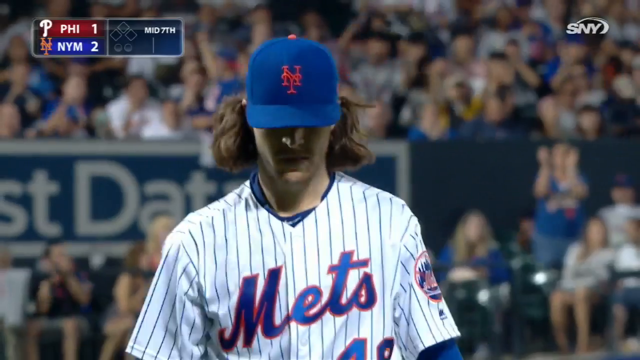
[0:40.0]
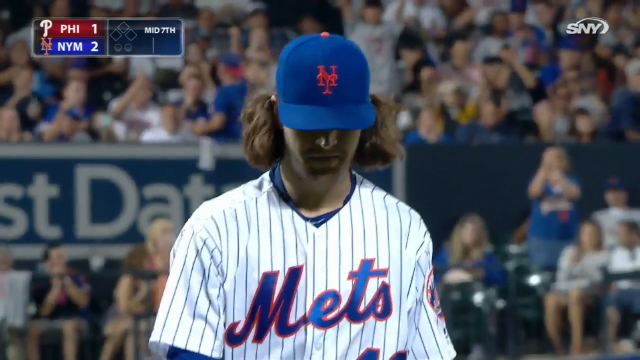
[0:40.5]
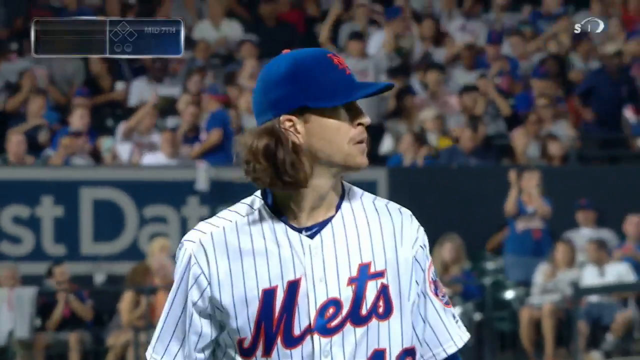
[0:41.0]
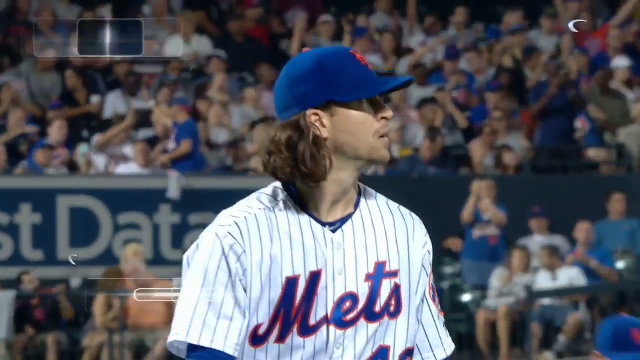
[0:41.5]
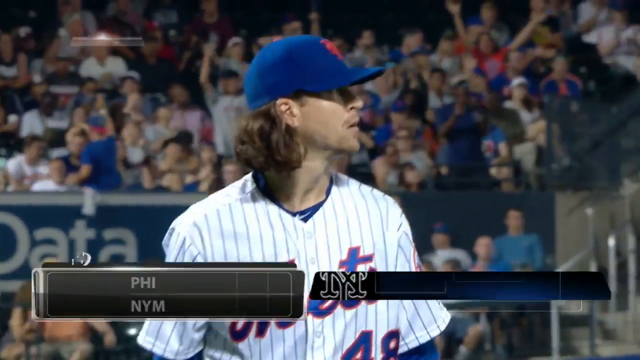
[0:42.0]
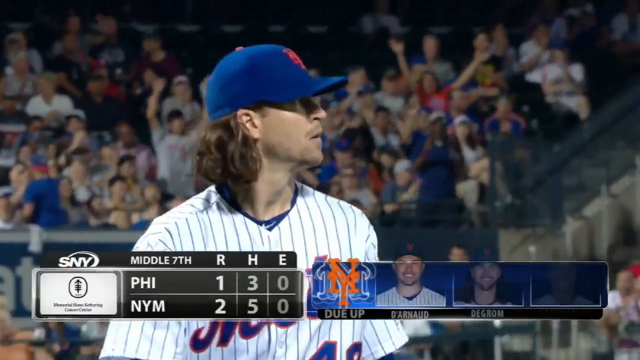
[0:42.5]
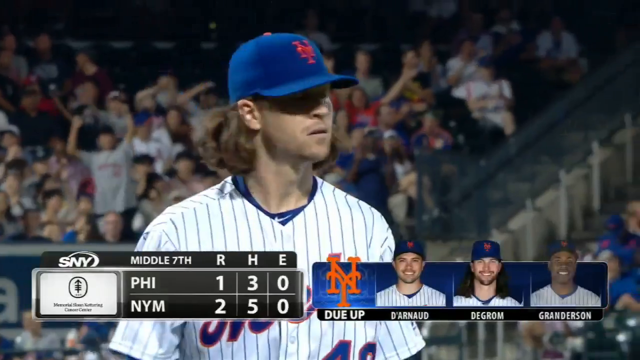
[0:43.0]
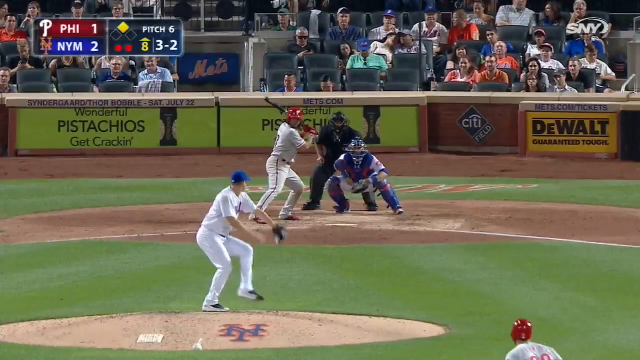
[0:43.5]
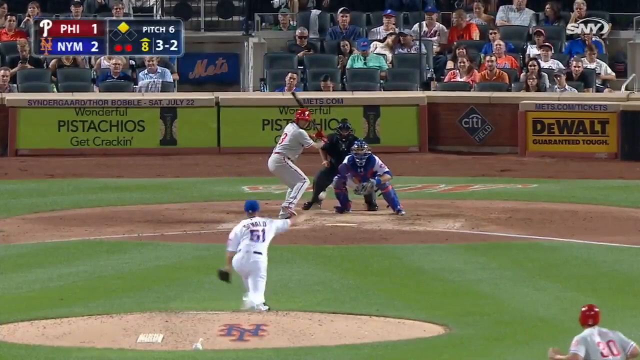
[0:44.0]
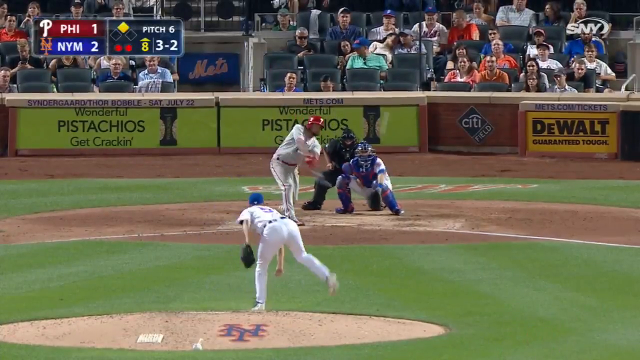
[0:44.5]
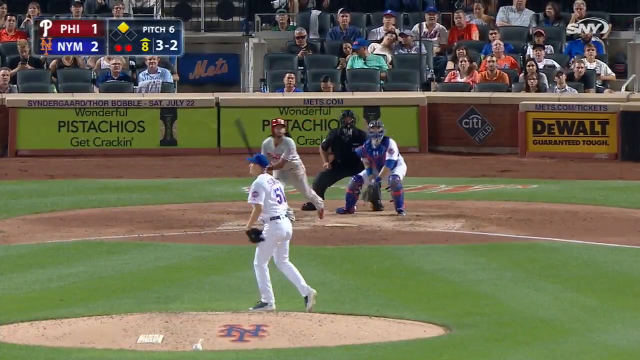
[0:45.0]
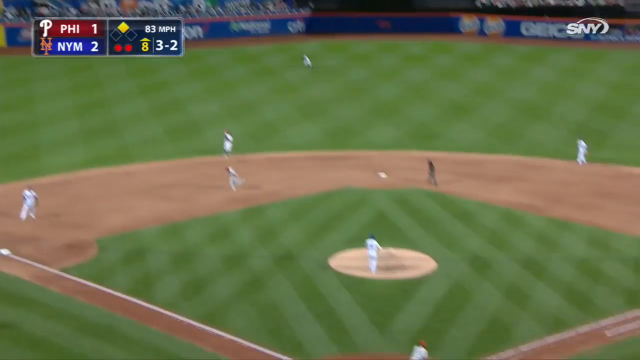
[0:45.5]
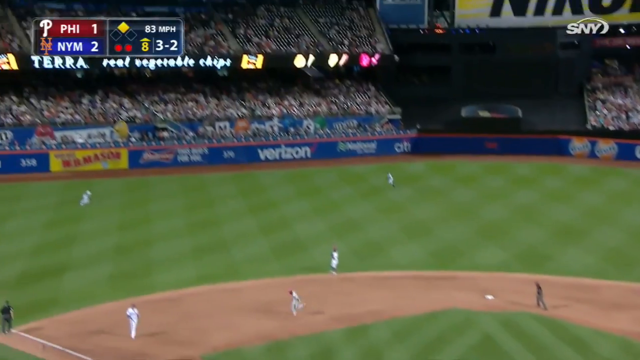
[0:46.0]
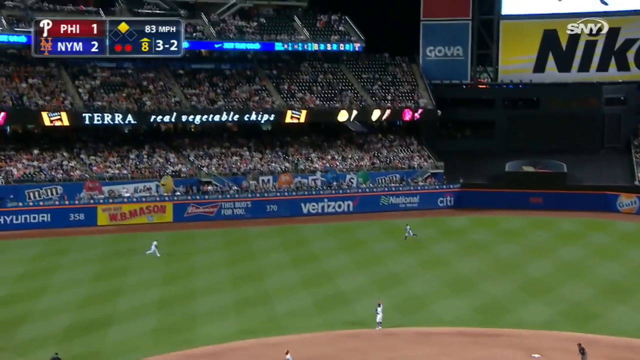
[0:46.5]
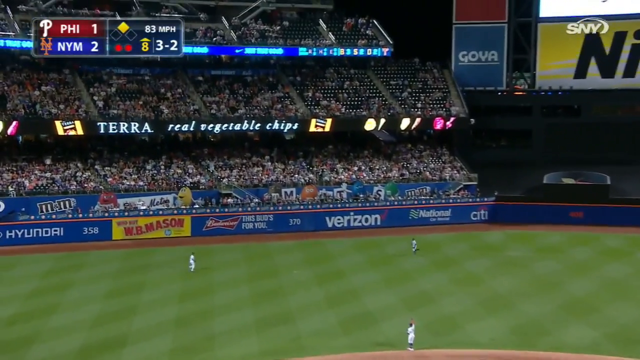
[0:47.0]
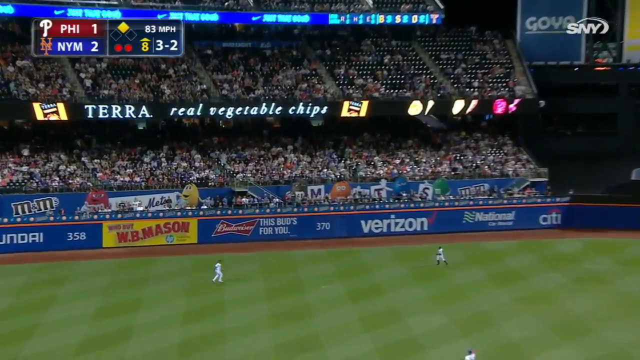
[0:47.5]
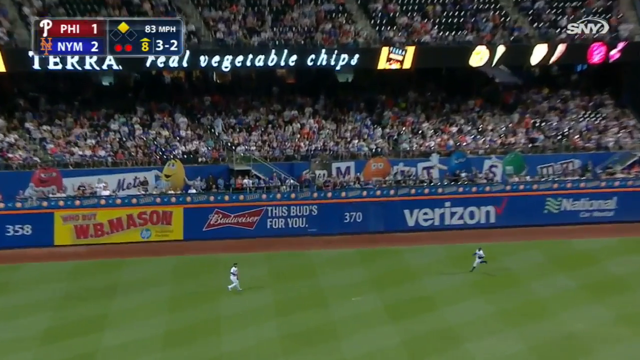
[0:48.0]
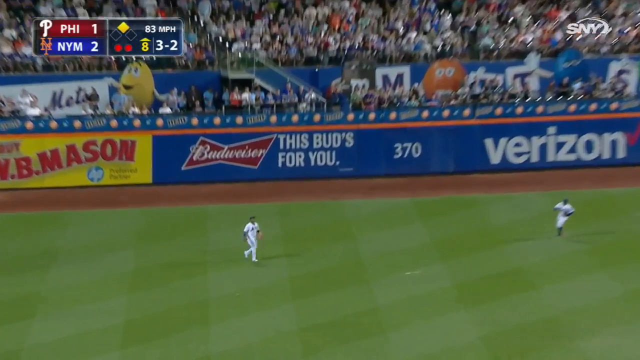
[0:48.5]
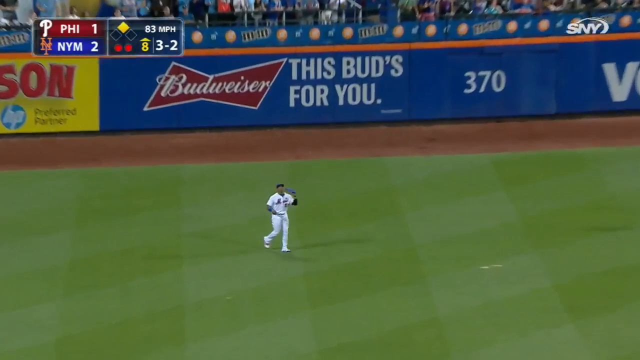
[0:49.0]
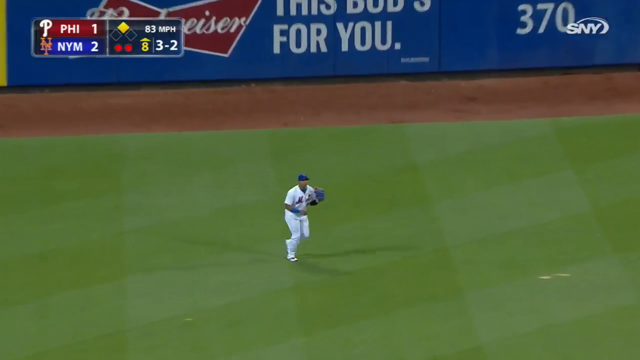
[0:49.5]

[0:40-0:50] Jacob DeGrom is shown walking, and then a new pitcher is put in, apparently replacing DeGrom. The new Mets pitcher pitches to a Phillies batter, who hits the ball, and it is caught for an out by a Mets outfielder. This is the middle of the seventh inning. Highlights and stats are shown, including the Mets players who will be hitting soon, among them DeGrom. The Mets are up 2-1, with five hits to three.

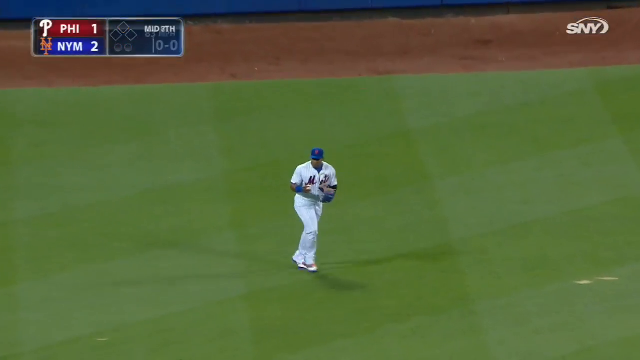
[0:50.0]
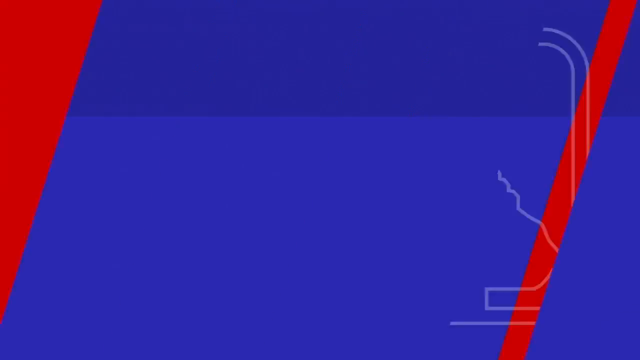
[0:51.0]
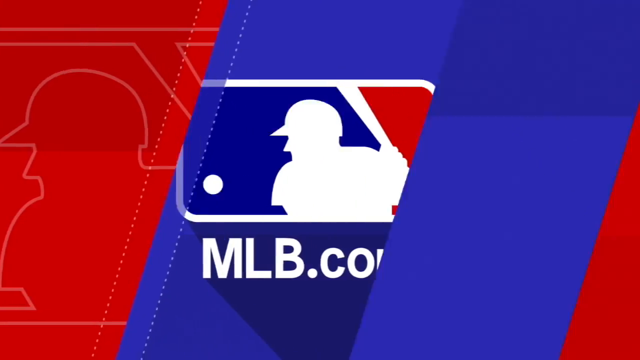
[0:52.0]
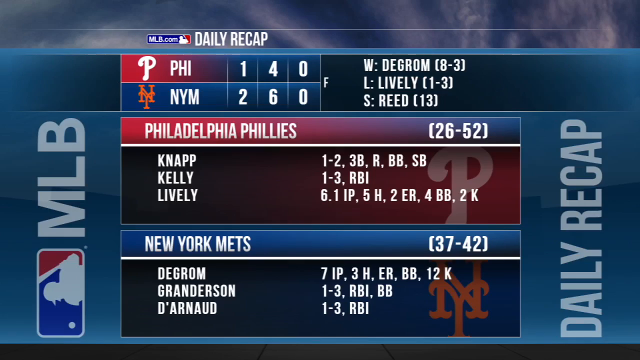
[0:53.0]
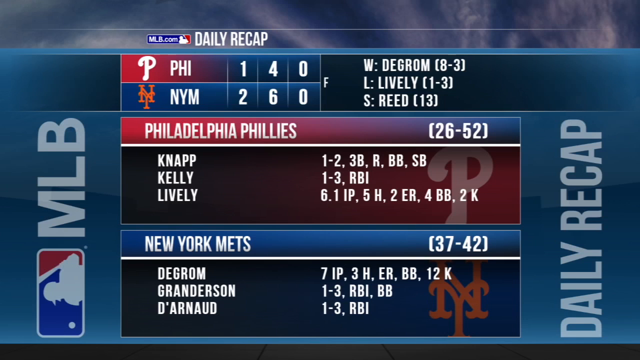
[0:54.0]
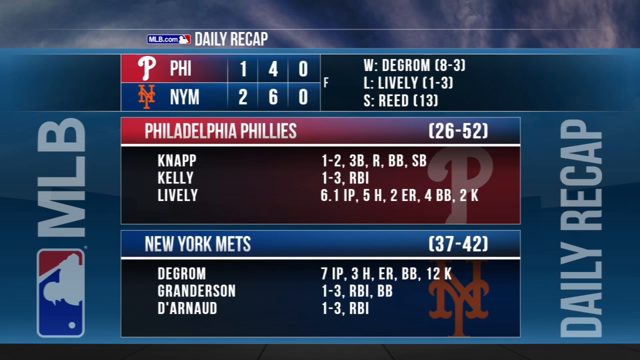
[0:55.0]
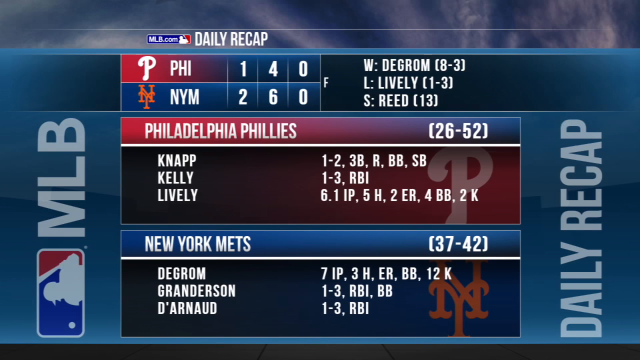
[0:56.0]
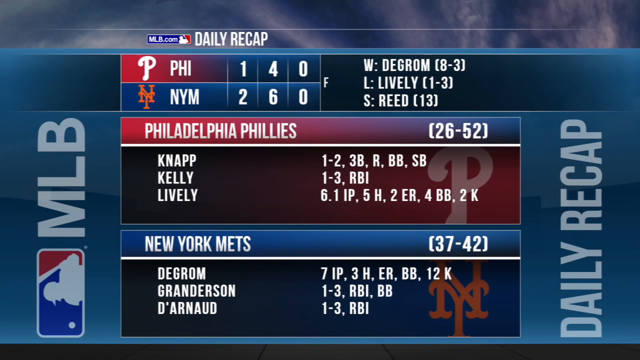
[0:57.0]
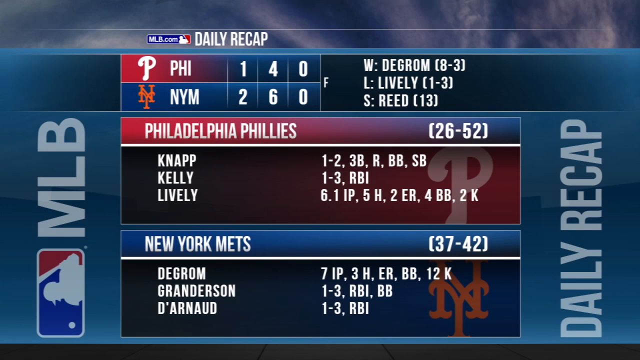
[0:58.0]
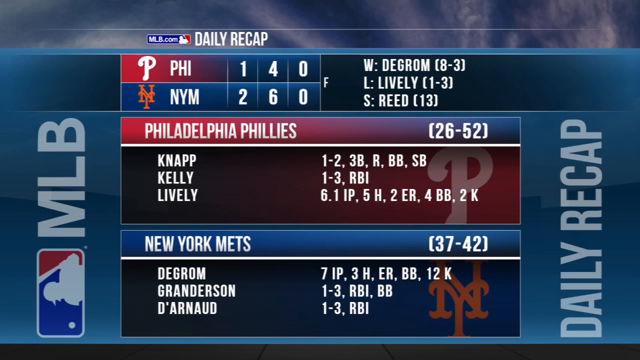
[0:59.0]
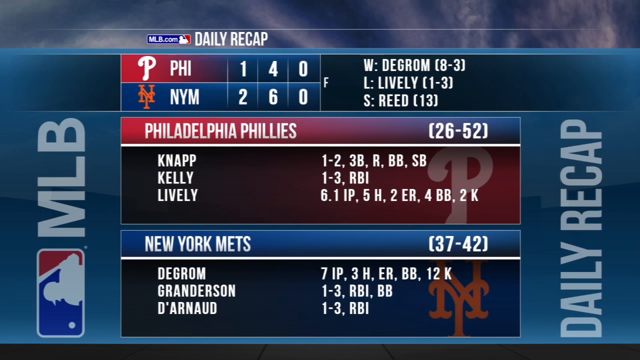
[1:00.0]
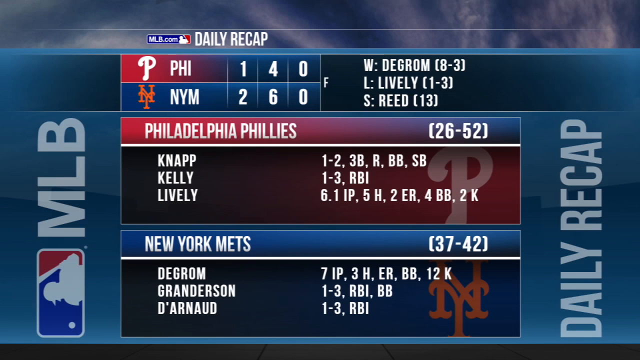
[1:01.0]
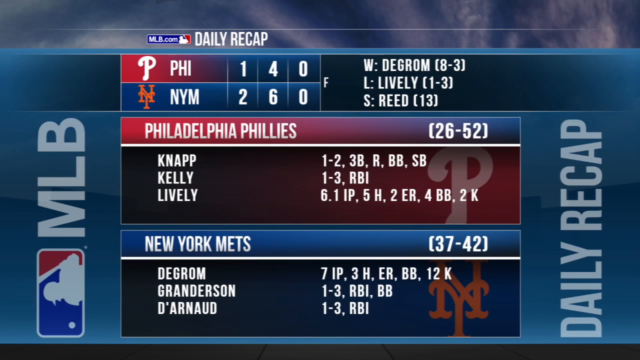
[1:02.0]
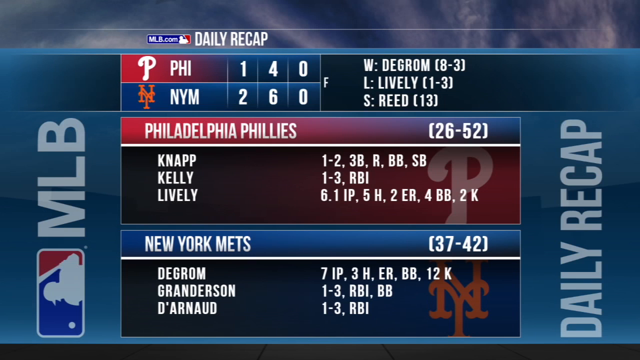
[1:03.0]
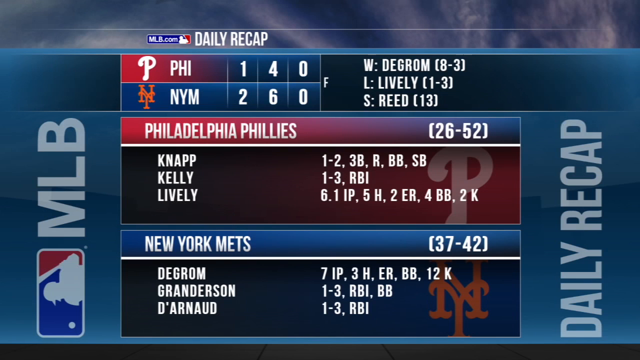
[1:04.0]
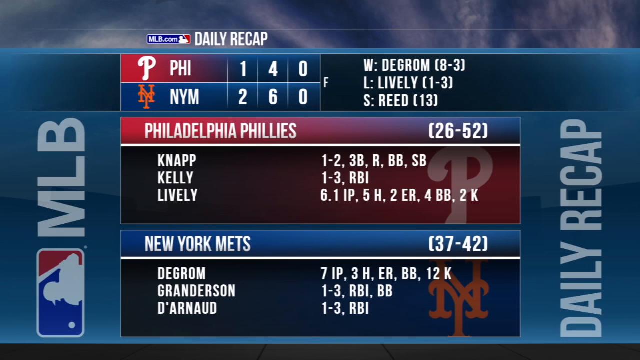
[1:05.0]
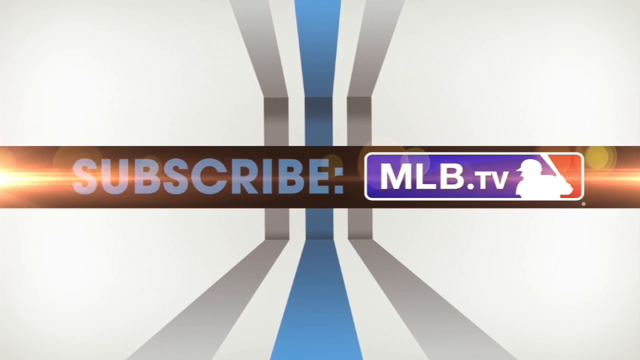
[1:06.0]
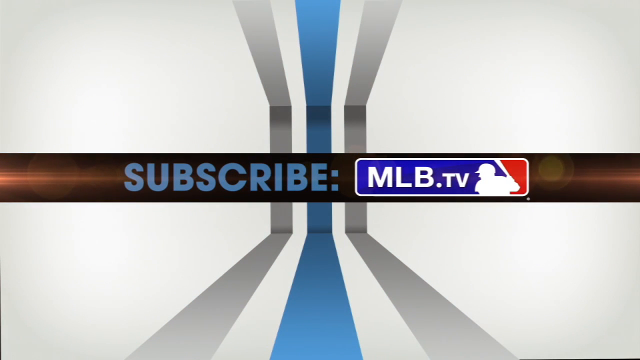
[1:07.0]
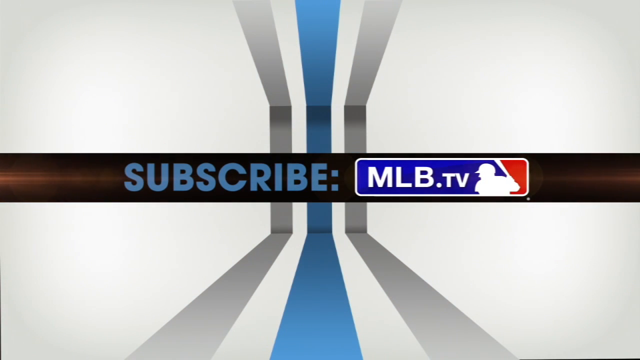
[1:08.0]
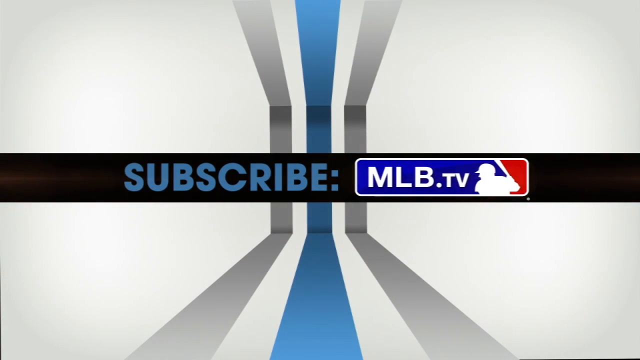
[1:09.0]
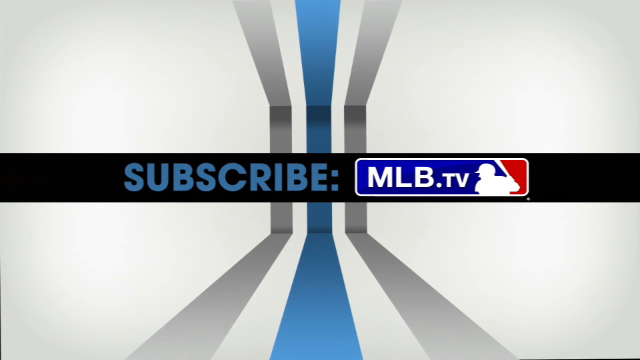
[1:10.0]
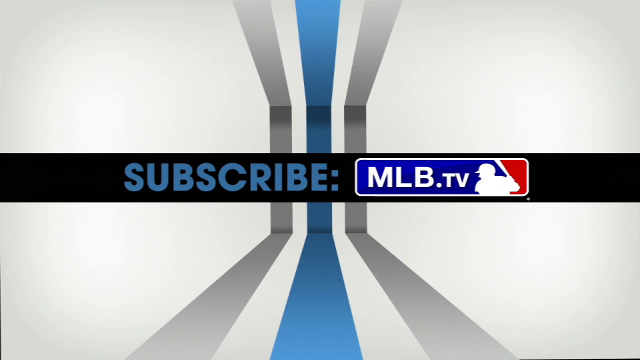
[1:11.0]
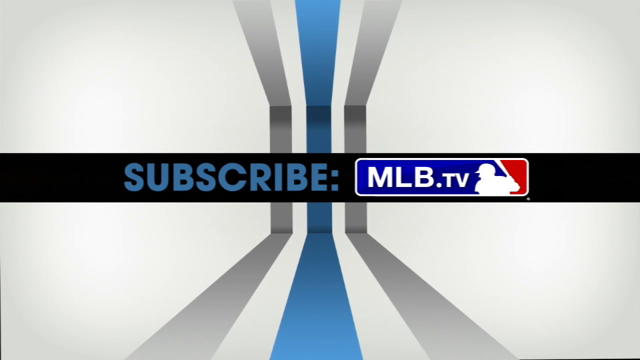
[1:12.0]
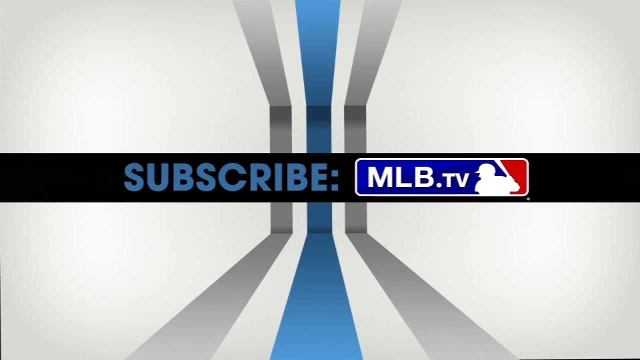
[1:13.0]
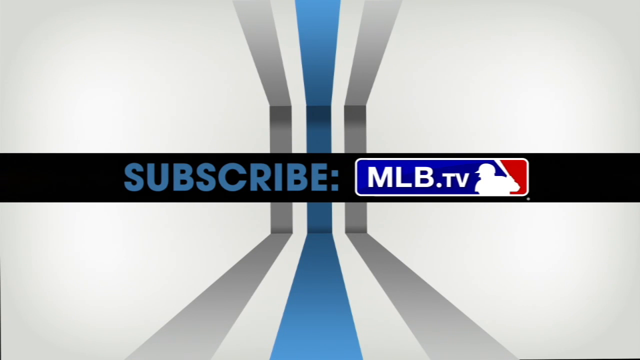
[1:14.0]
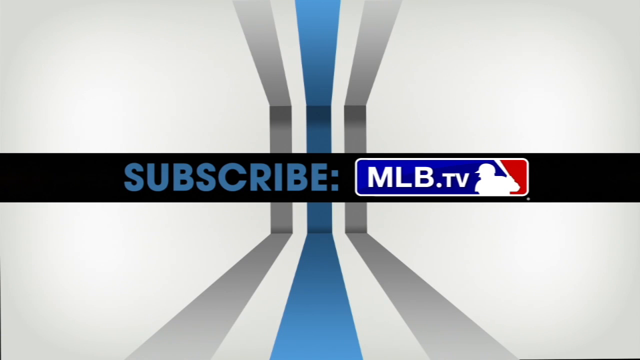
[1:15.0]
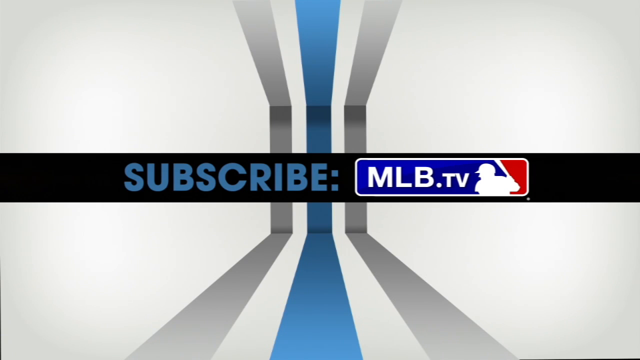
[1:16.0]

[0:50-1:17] An inning seemingly ends, and the MLB logo flashes across the screen. The daily recap stats of the Mets-Phillies game follow: the Mets are up 2-1 with 6-4 hits. The Phillies players listed are Nap, Kelly and Lively, who seem to be having the strongest showing, and the Mets players are DeGrom, Gregerson and Darnold. Stats for all the players are then displayed. The video ends with a logo asking viewers to subscribe to MLB TV. The main subjects are the players, with DeGrom apparently the one being followed.